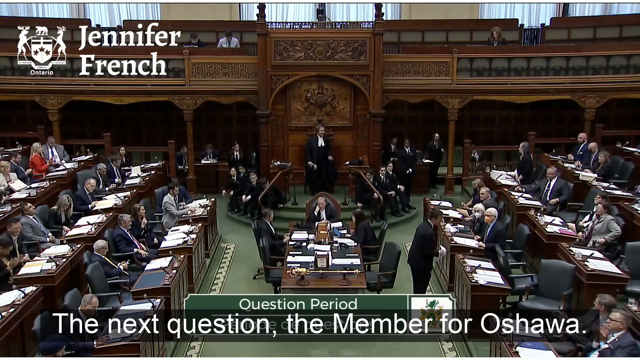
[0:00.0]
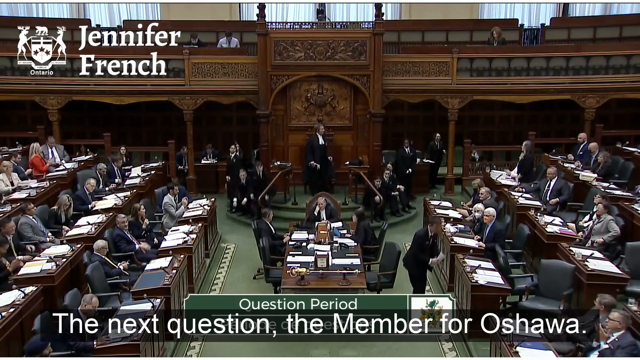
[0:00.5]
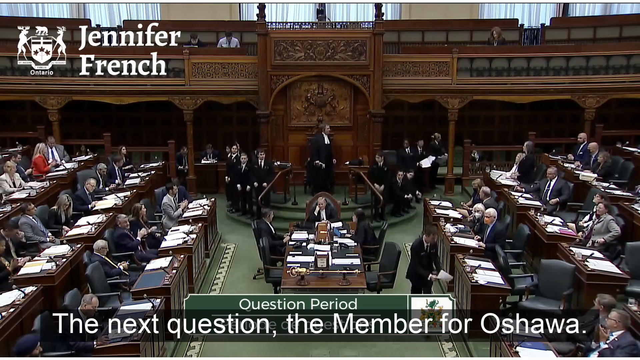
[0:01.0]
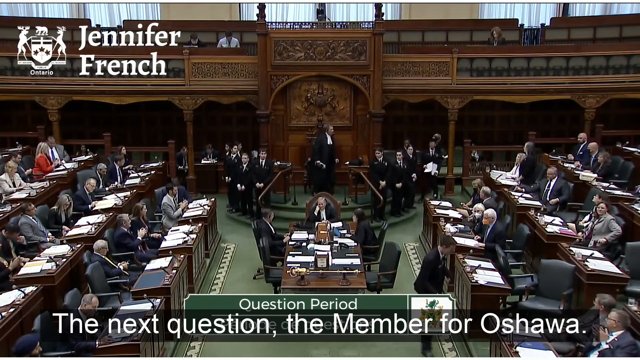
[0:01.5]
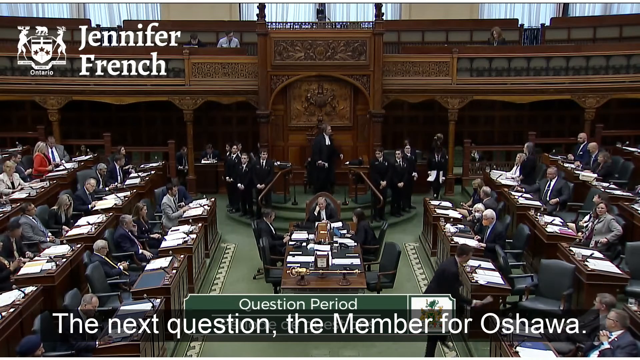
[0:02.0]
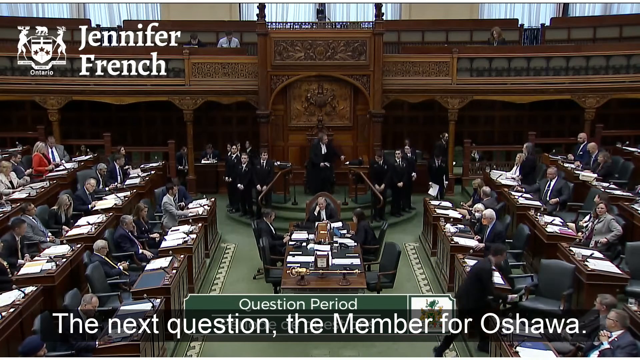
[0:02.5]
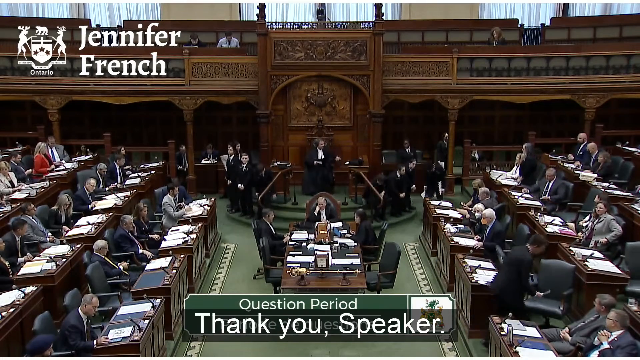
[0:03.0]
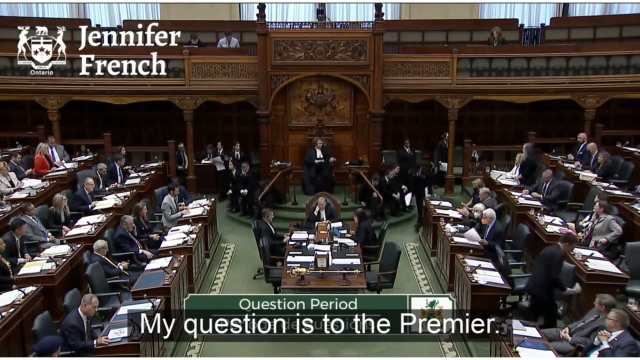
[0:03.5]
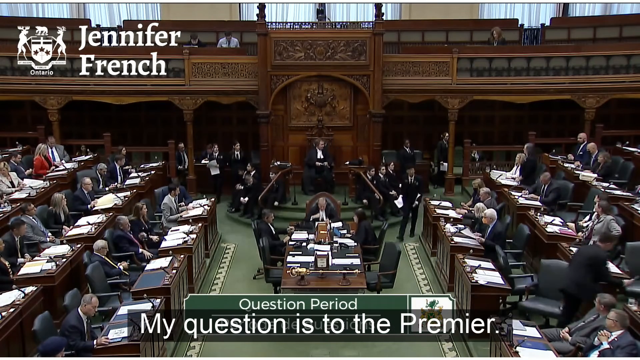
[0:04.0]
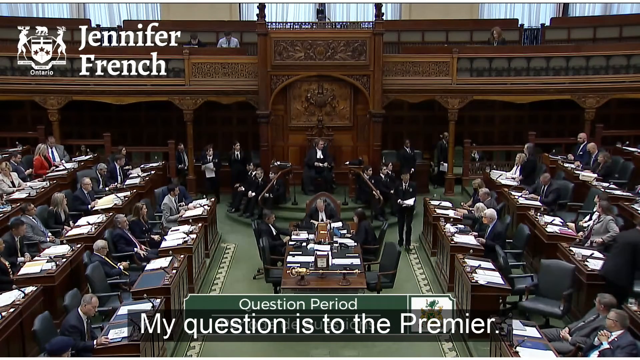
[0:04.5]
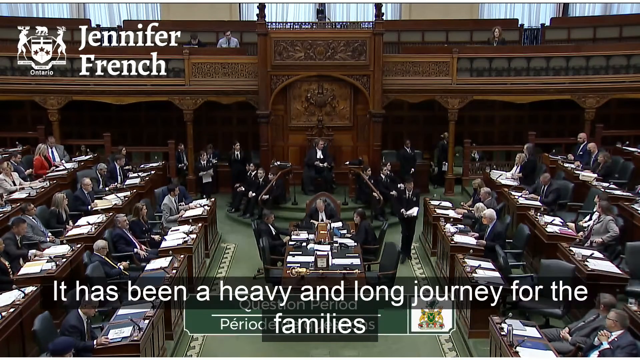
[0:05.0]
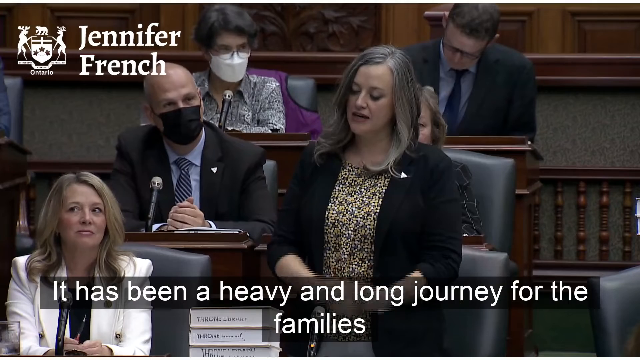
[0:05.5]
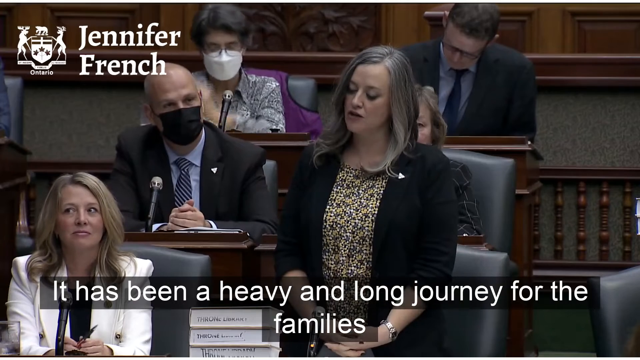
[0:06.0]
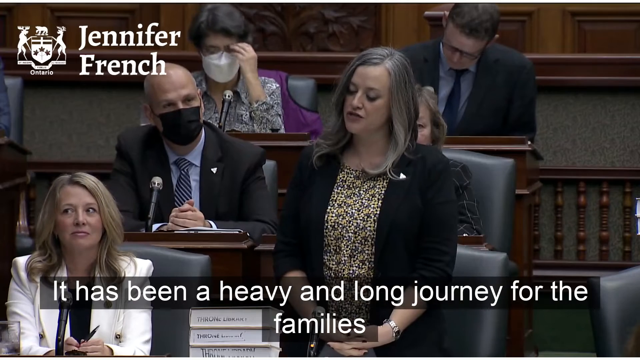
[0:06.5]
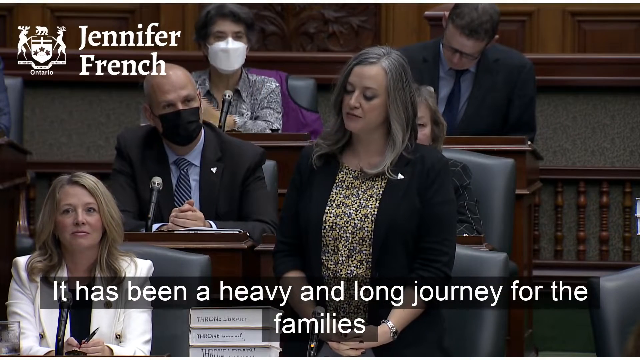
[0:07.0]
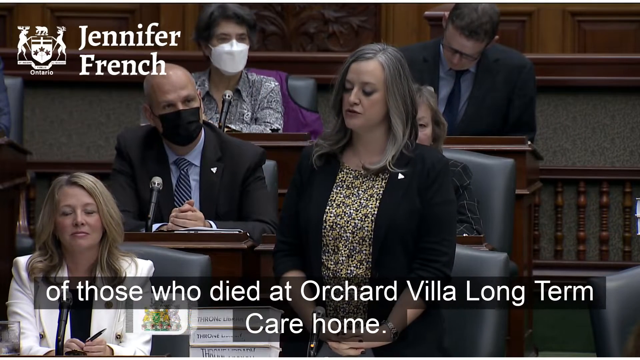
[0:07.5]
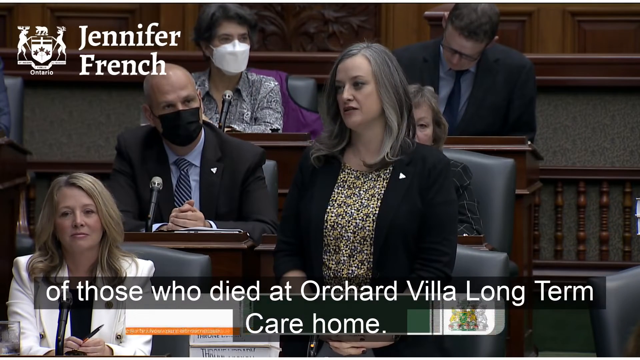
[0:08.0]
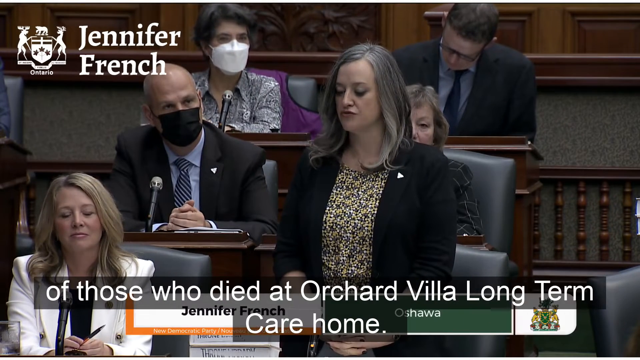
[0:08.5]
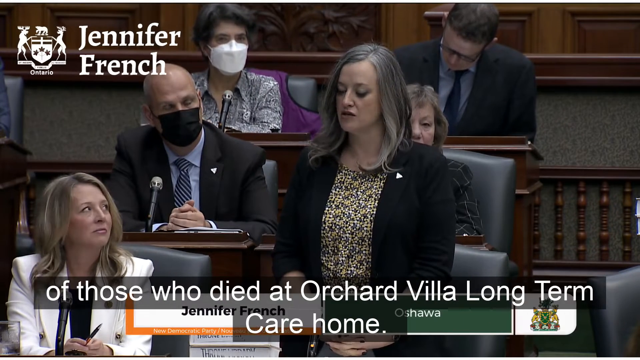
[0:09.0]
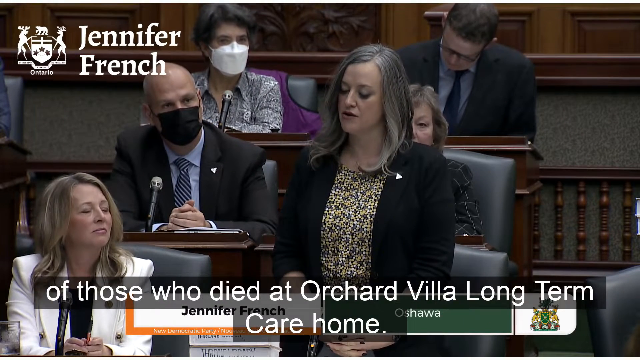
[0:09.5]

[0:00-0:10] On the left, three rows are visible, facing to the right; on the right, three rows are visible, facing to the left. In the center is a desk with two men sitting, one man standing, and a woman sitting on the right. In front of them is a small half-circle podium, and in its center stands a man wearing something similar to a judge's robe with a white collar around his neck. Four men sit on the steps of the podium to his left and three men sit on the steps to his right. Behind them are desks on either side, with two people at the desk on the left and another to the left of that desk, and three people by the desk on the right. Most of the people are men in suits, with a couple of women scattered throughout. In the top left corner of the screen, white text reads "Jennifer French" with an emblem to its left. At the bottom of the screen, a green text box reads "question period", and white text underneath says "the next question the member for Oshawa." The man at the podium is standing, the men on the steps on either side of him stand, and then they all sit down together. White text at the bottom then reads "it has been a heavy and long journey for the families."